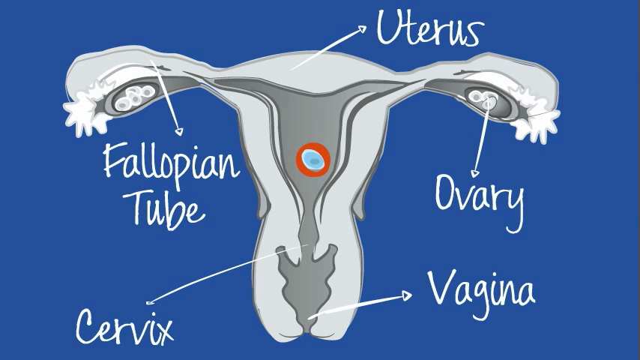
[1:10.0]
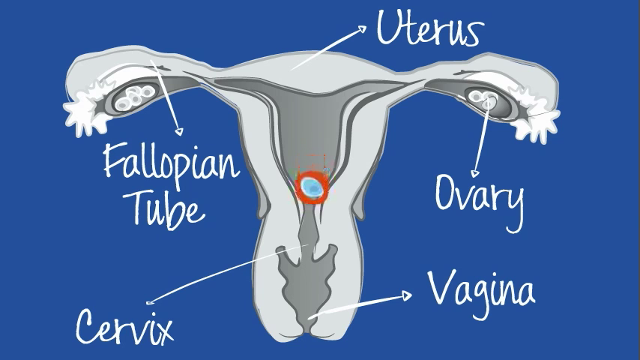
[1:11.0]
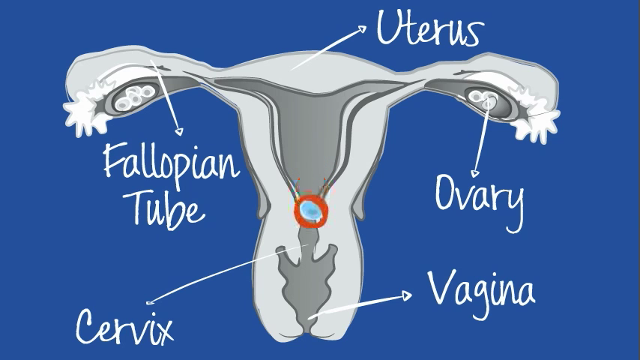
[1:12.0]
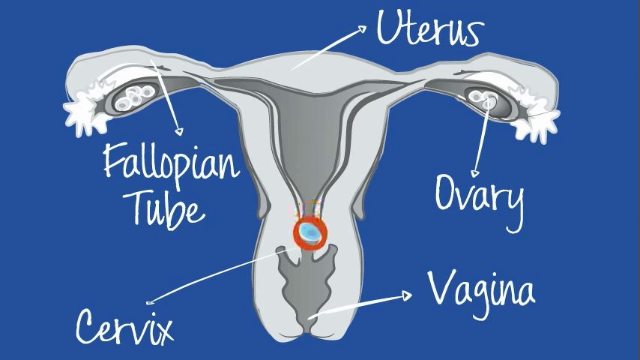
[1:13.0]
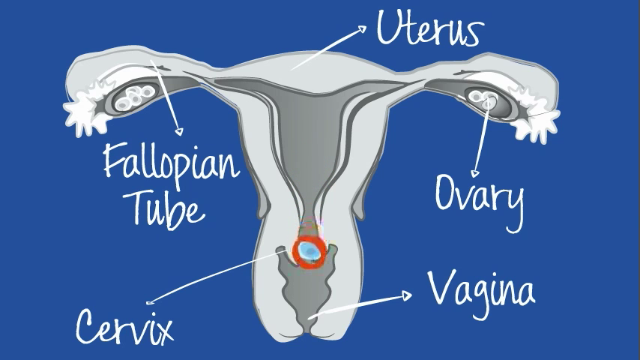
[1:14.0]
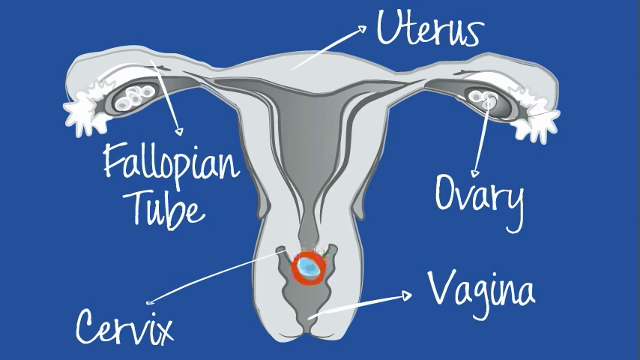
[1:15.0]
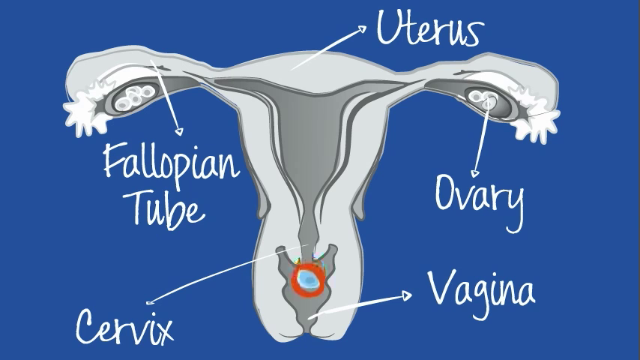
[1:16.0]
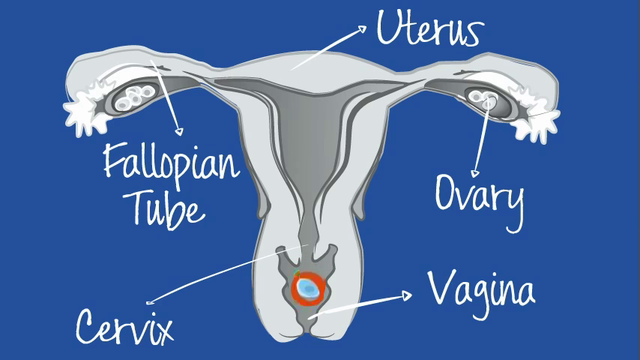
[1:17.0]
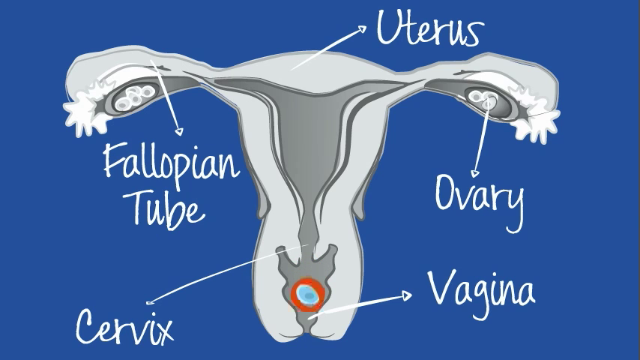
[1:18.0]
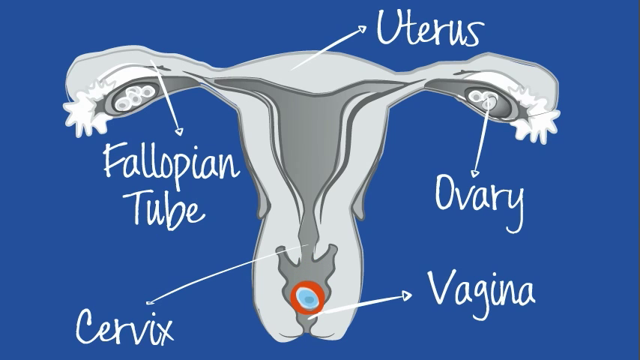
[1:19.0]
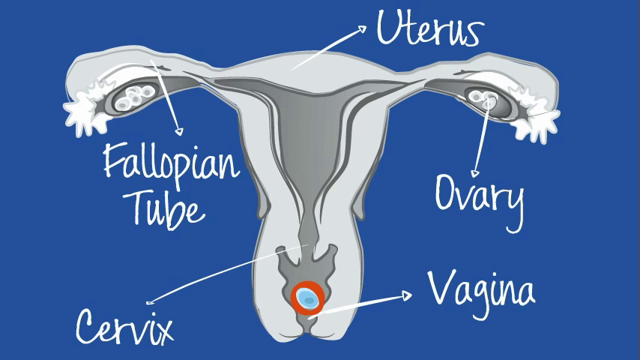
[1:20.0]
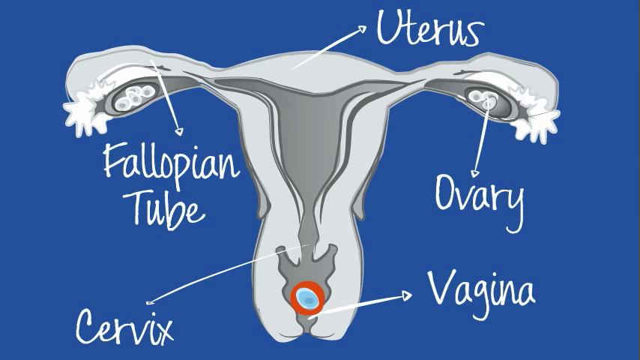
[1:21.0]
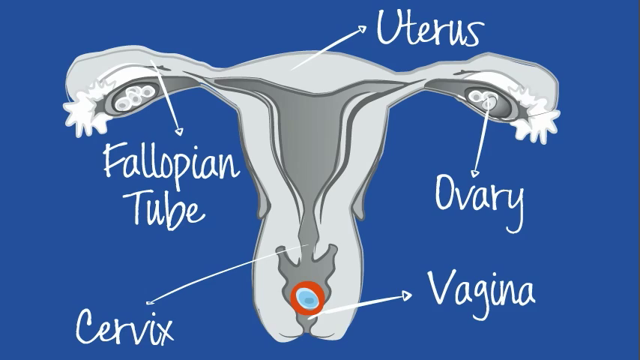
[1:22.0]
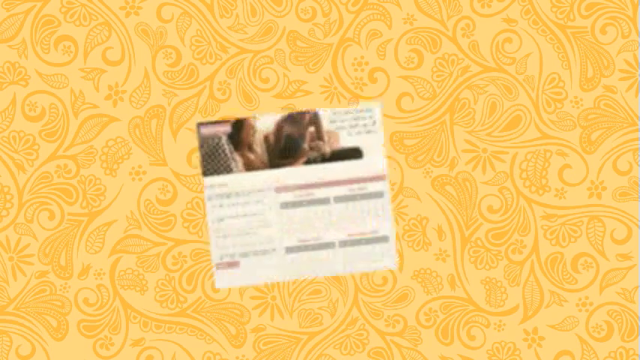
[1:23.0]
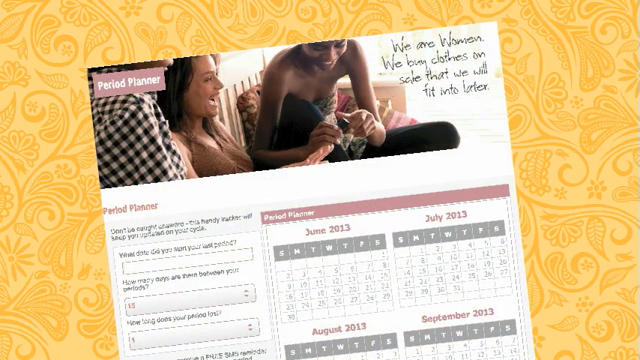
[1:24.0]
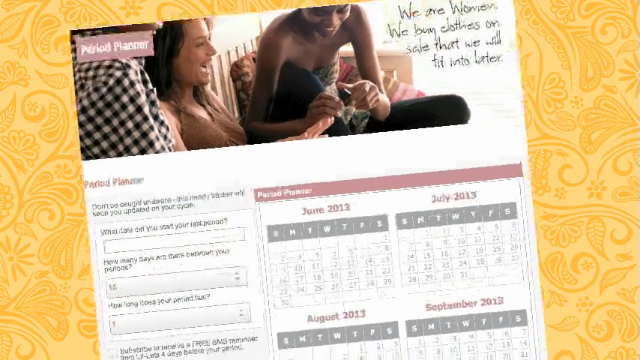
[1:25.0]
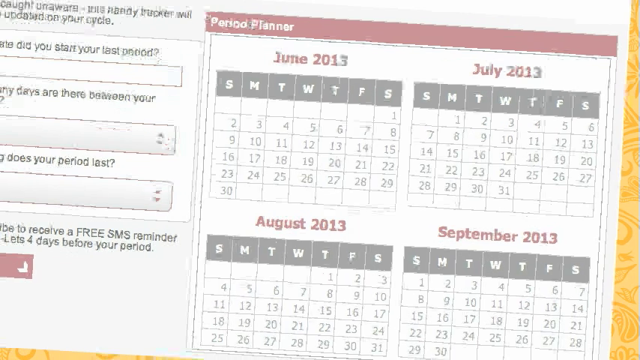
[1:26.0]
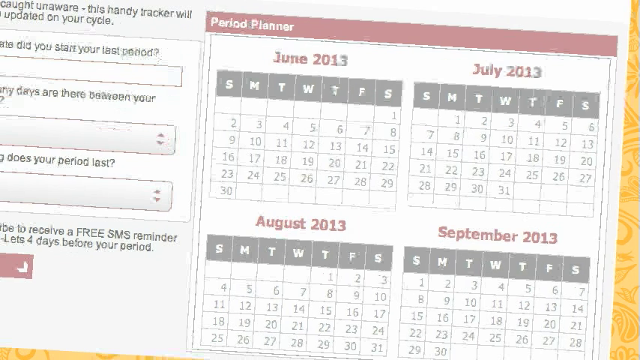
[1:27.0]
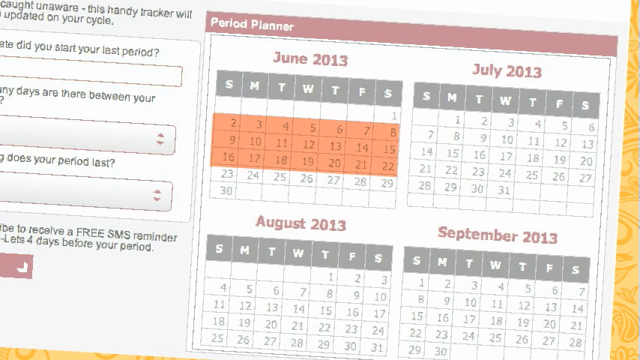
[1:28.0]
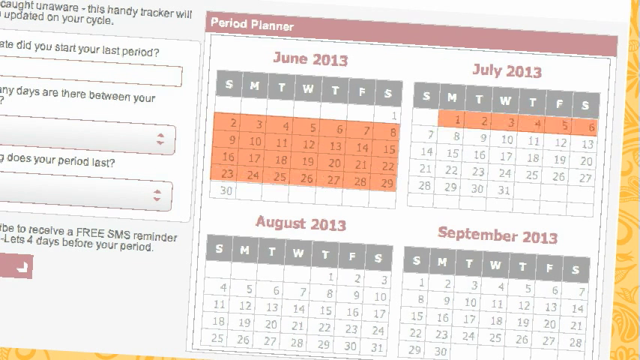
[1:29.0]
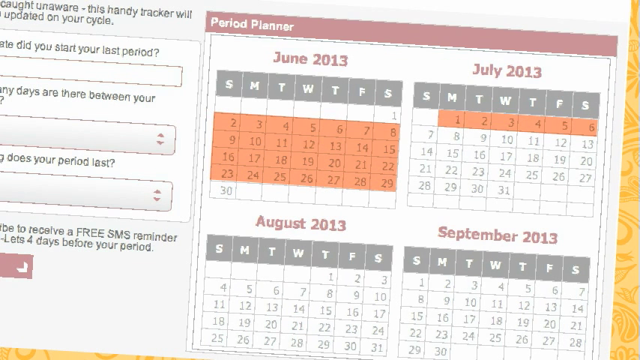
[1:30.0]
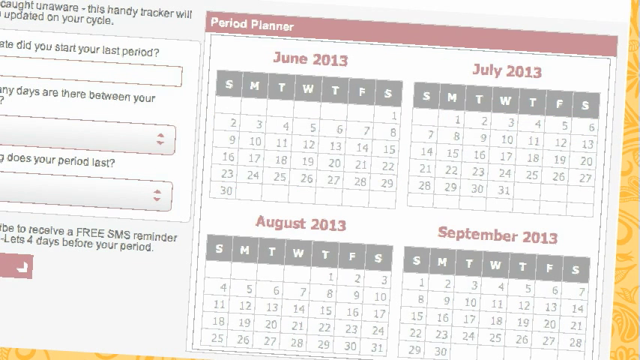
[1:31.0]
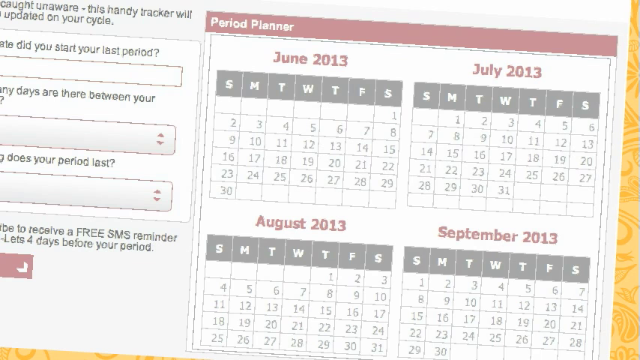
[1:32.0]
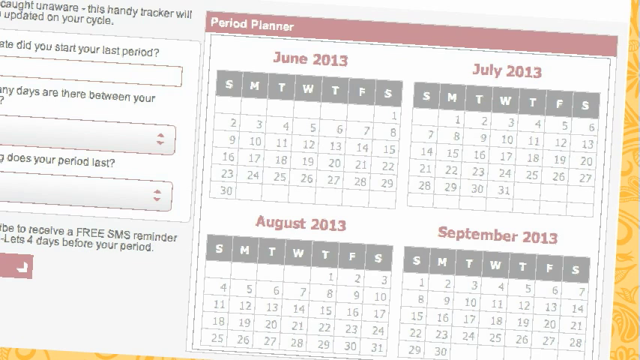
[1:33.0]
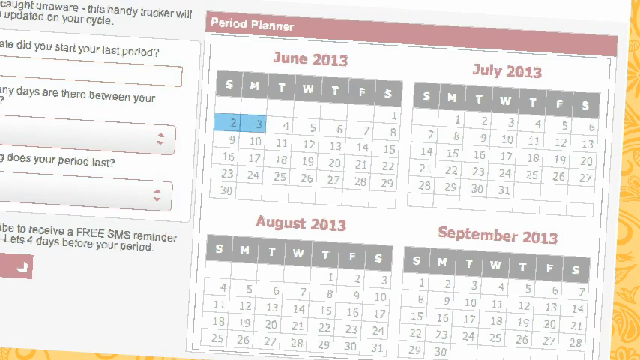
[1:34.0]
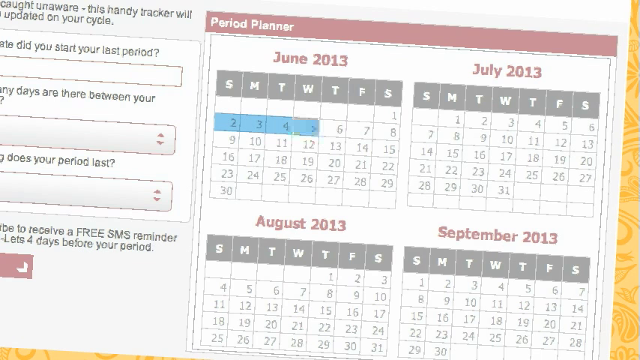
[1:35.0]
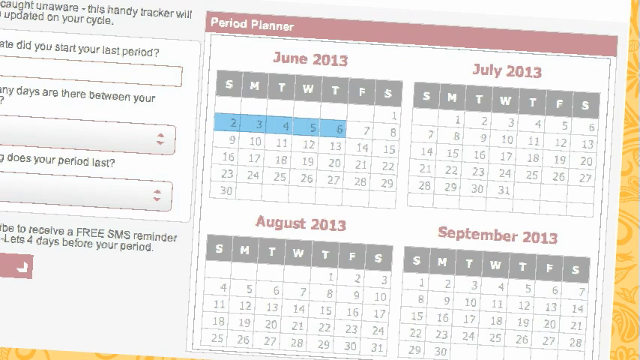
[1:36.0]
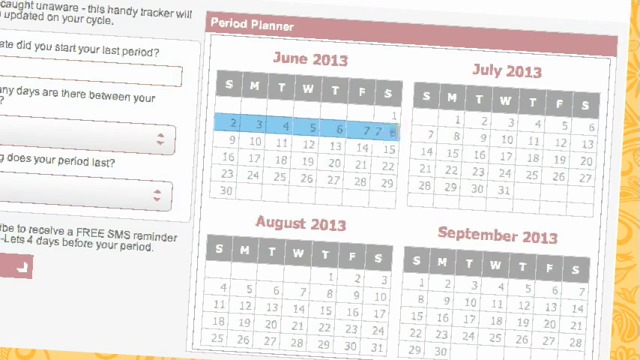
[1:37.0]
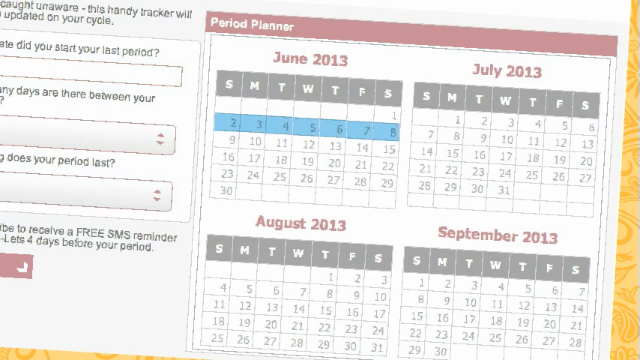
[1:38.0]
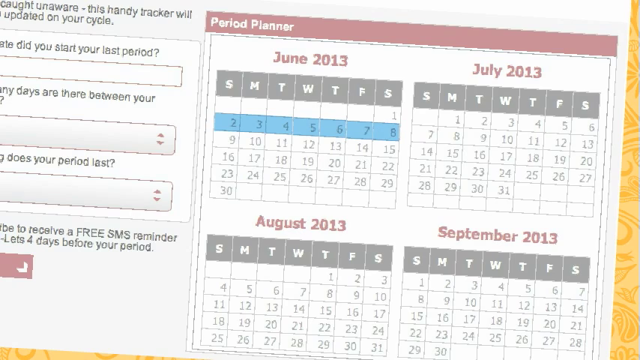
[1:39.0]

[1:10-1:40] On a blue background is an illustration of a woman's reproductive organs in white and gray; it shows the ovaries, the uterus appears gray, and everything else is outlined in white. At the top right, "uterus" is labeled with a white line pointing to the uterus. To the right of the illustration, "ovary" has a line pointing up to the ovary, which contains some white eggs. Below it, "vagina" has a line pointing to the vagina. At the bottom left, "cervix" has a line pointing to the cervix, and above it "fallopian tube" has a line pointing up to the fallopian tube. A blue egg in the uterus, surrounded by a red circle, falls down toward the vagina and reaches the base of the vagina, apparently illustrating a period. This disappears, and the yellow background with the floral pattern returns, showing a calendar with two women at the top, one Caucasian and one African-American. At the top right, text reads "we are women. we buy clothes ourselves that we will fit into later." The view zooms in on the calendar, which reads "June 2013", "July 2013", "August 2013" and "September 2013", and some of the days are marked off.